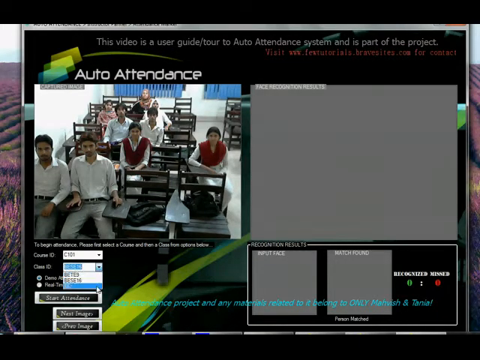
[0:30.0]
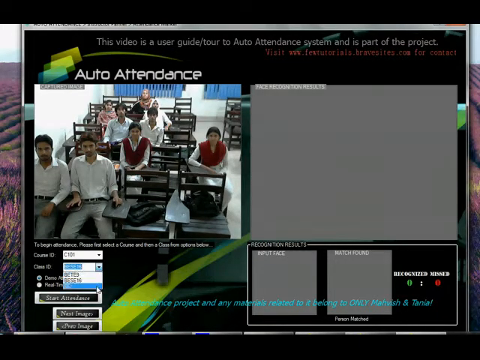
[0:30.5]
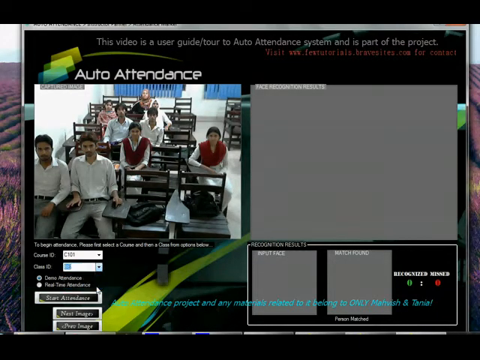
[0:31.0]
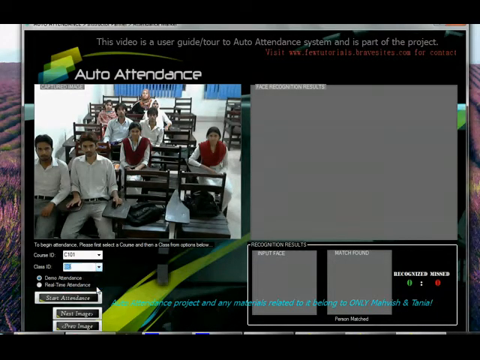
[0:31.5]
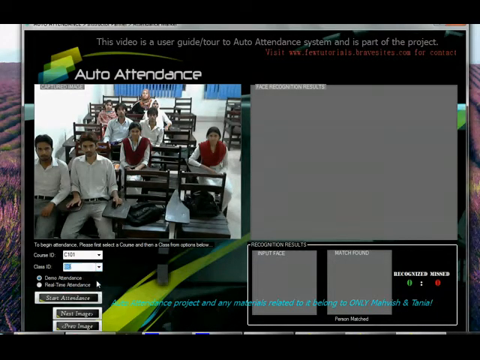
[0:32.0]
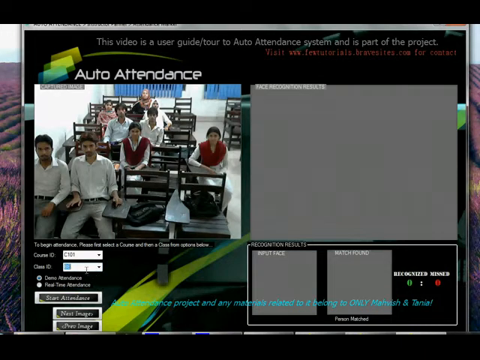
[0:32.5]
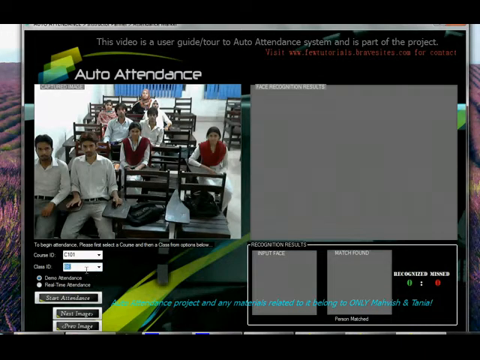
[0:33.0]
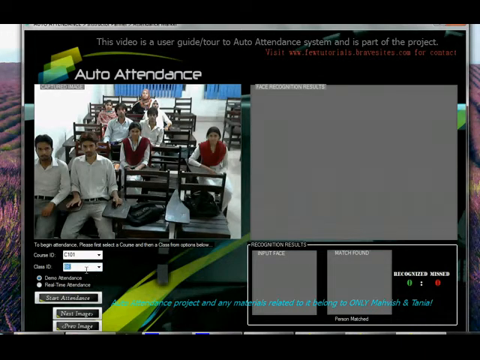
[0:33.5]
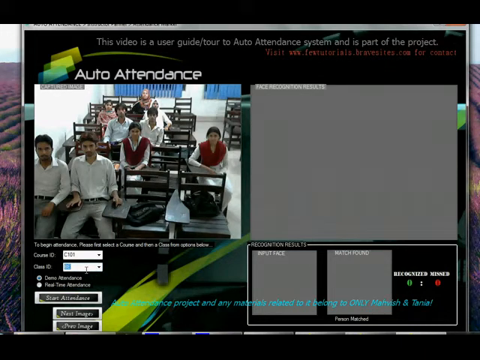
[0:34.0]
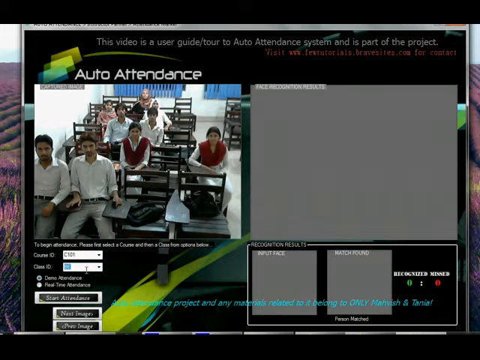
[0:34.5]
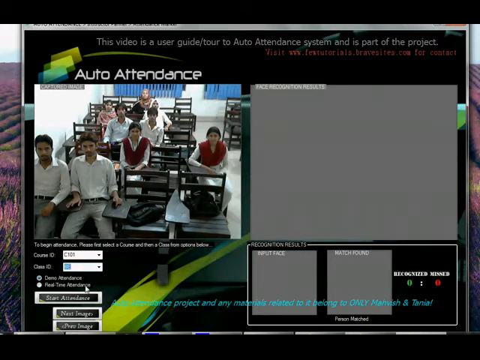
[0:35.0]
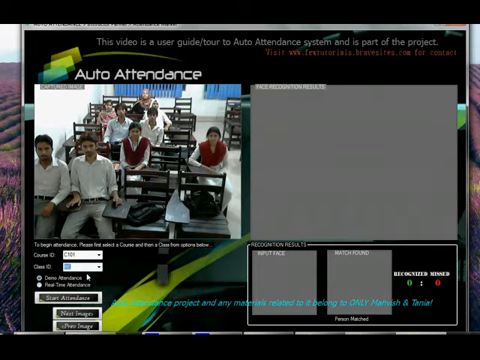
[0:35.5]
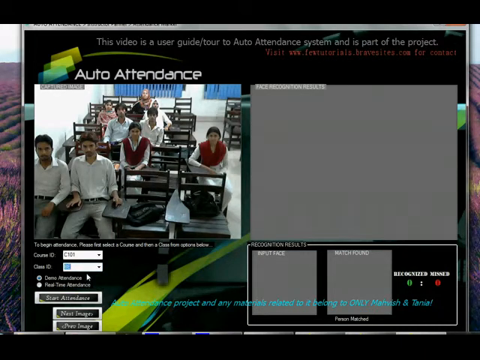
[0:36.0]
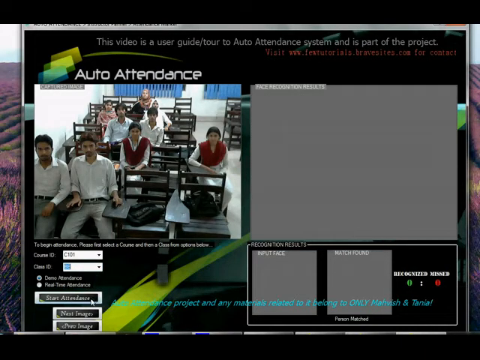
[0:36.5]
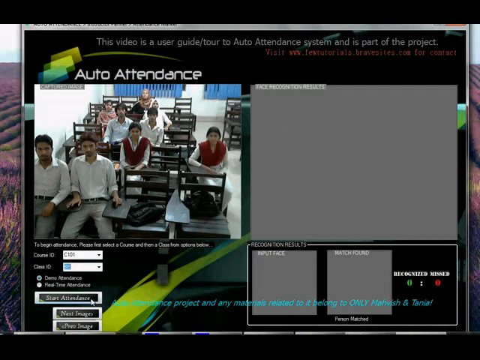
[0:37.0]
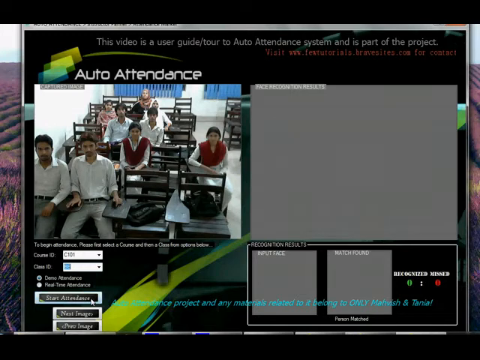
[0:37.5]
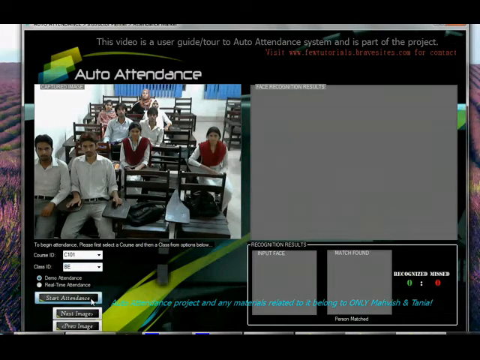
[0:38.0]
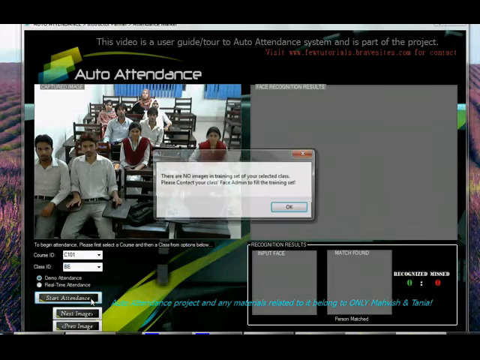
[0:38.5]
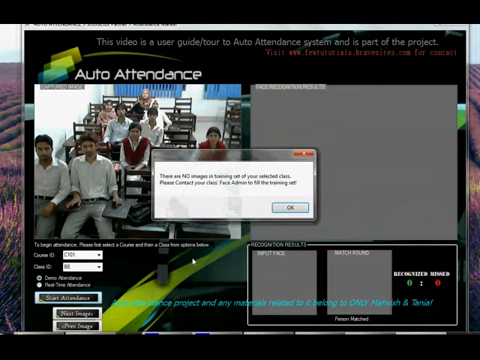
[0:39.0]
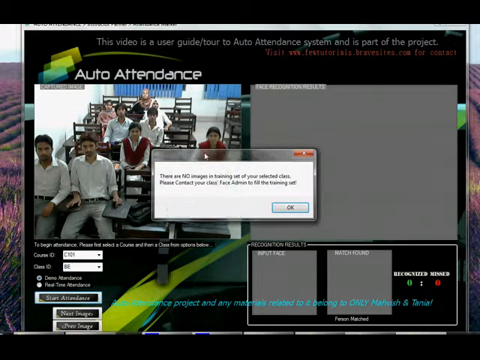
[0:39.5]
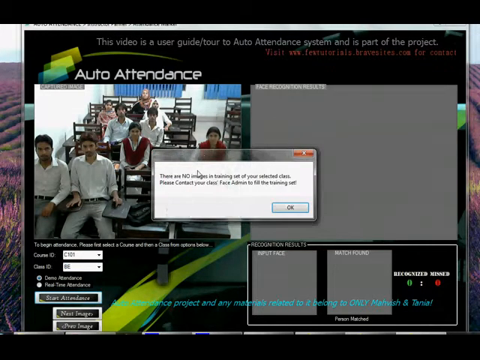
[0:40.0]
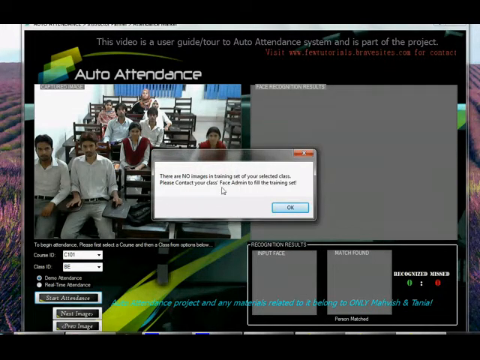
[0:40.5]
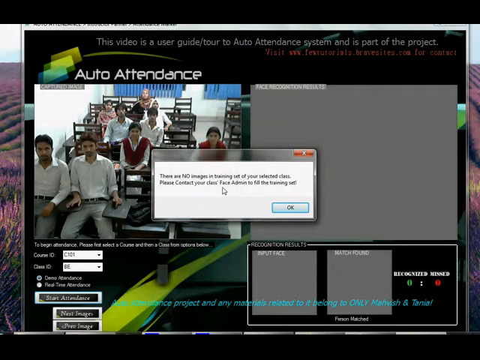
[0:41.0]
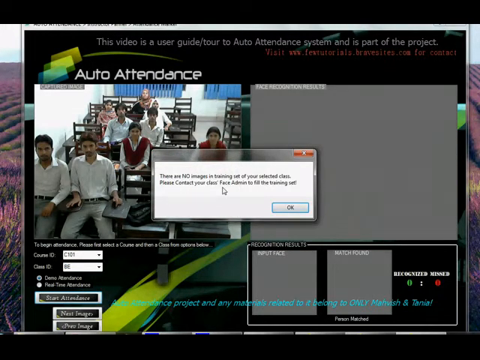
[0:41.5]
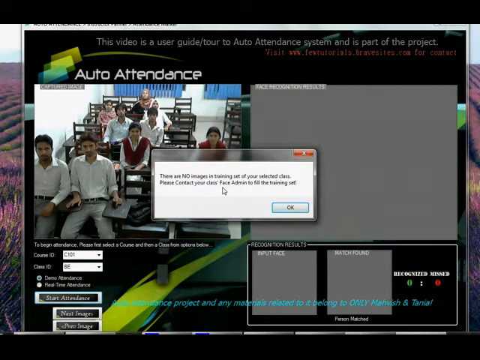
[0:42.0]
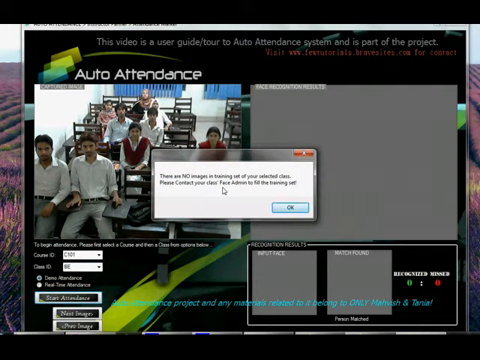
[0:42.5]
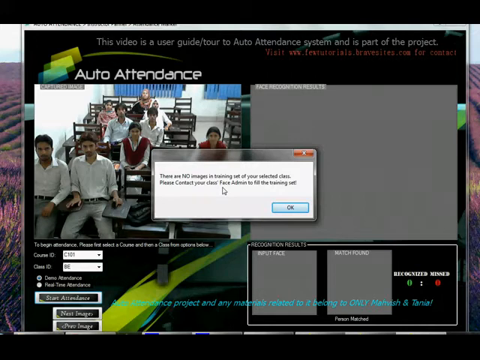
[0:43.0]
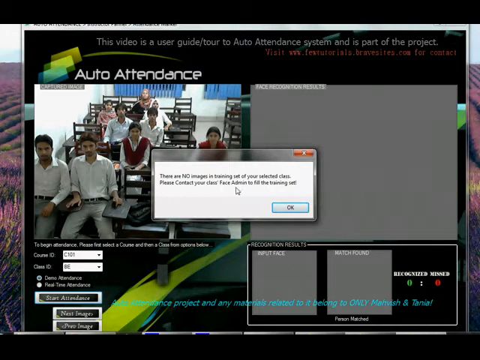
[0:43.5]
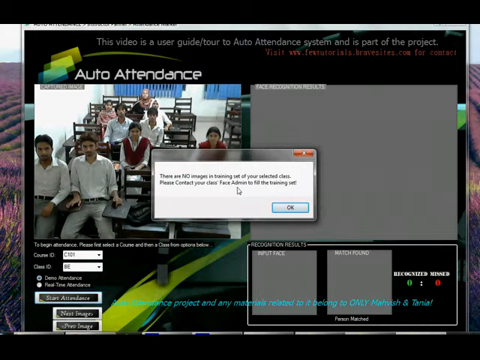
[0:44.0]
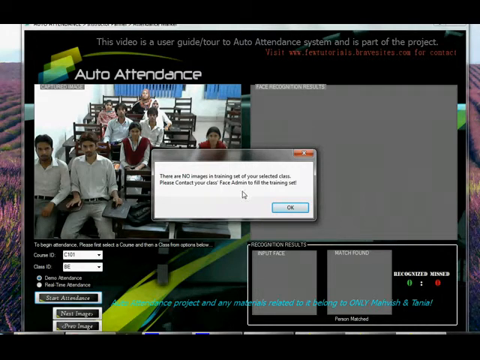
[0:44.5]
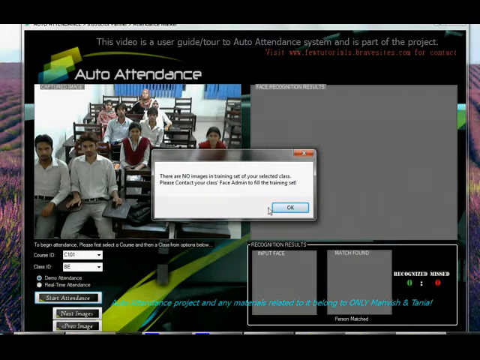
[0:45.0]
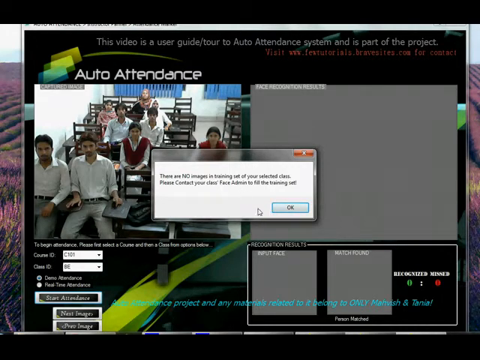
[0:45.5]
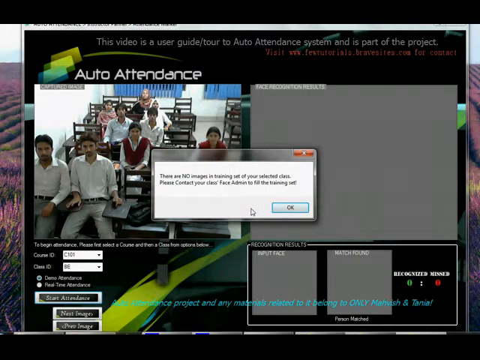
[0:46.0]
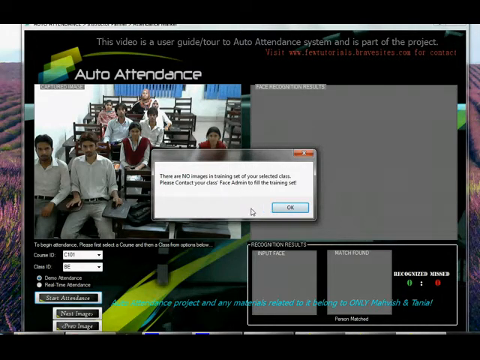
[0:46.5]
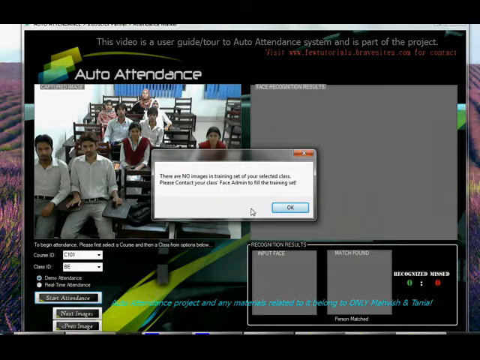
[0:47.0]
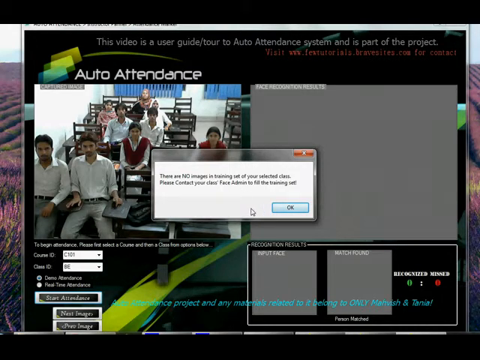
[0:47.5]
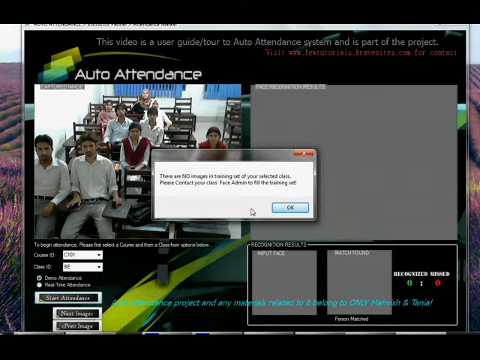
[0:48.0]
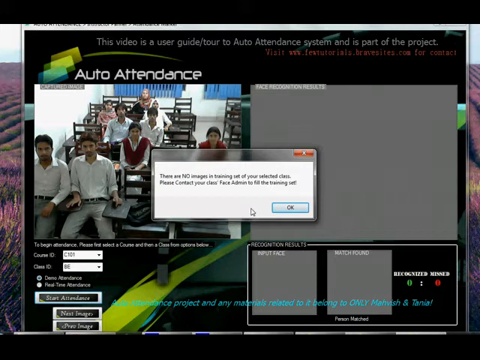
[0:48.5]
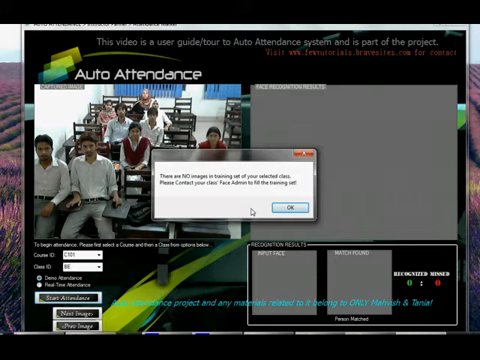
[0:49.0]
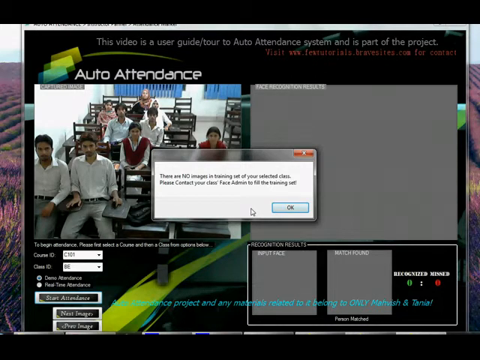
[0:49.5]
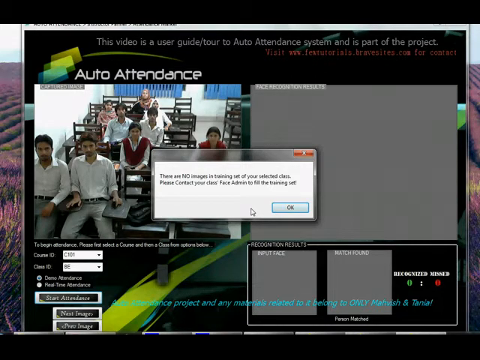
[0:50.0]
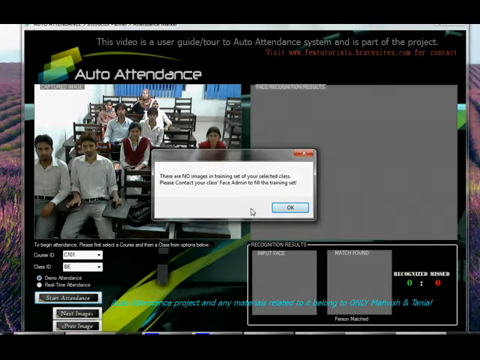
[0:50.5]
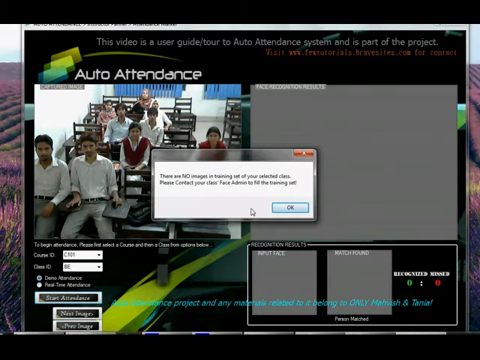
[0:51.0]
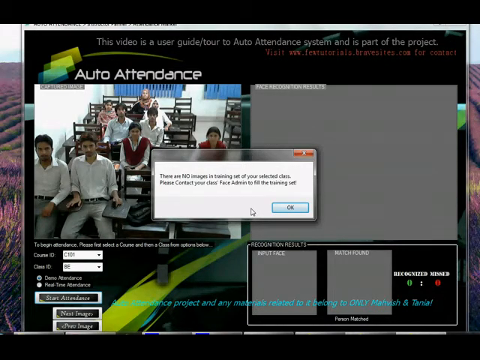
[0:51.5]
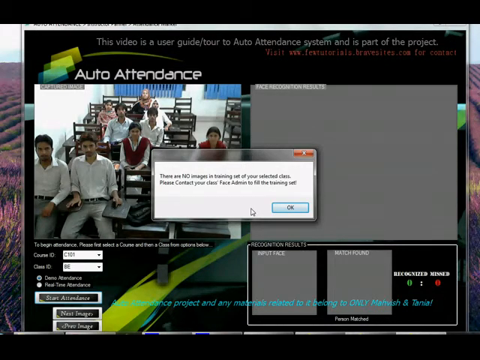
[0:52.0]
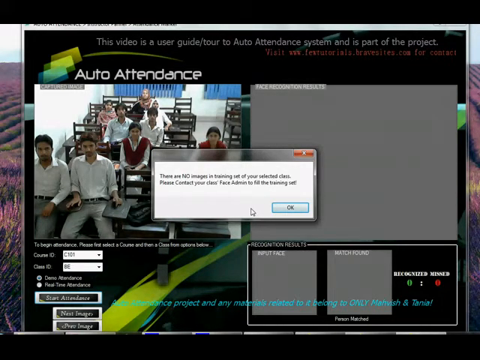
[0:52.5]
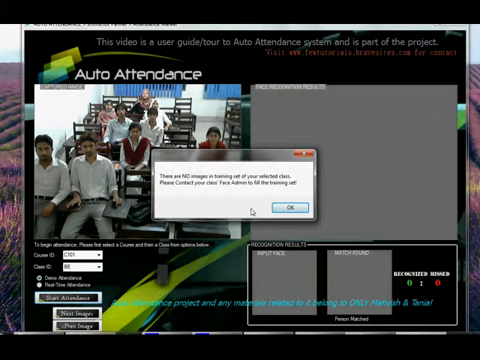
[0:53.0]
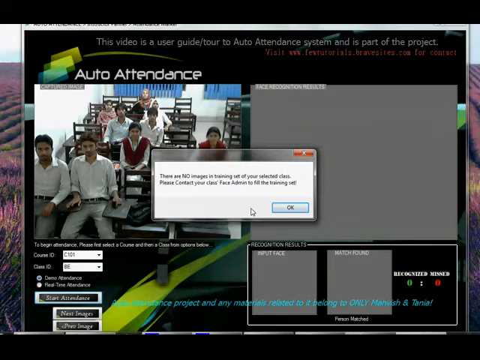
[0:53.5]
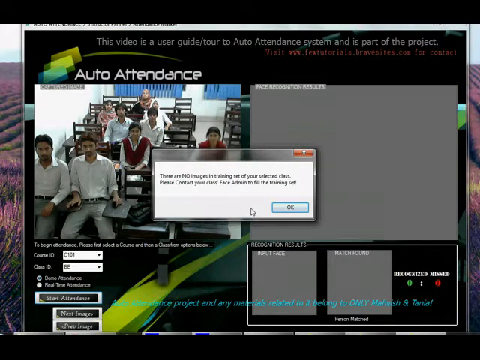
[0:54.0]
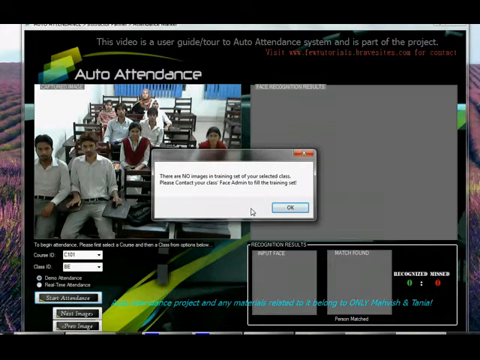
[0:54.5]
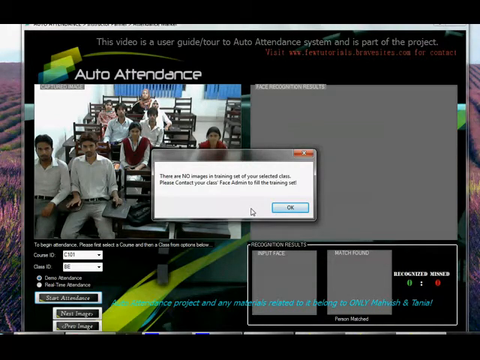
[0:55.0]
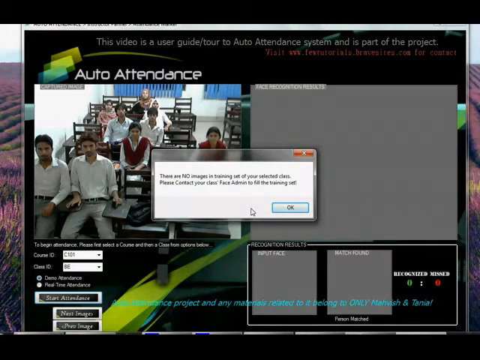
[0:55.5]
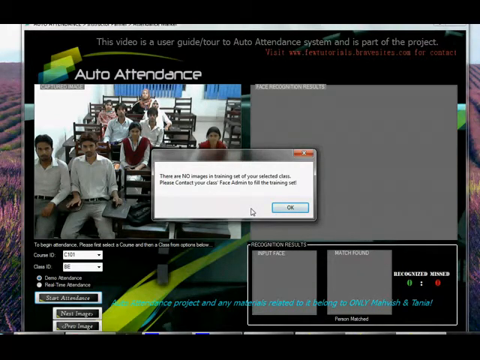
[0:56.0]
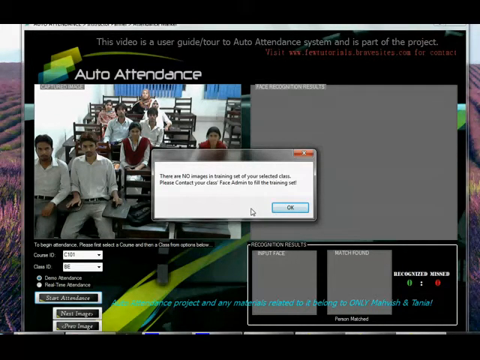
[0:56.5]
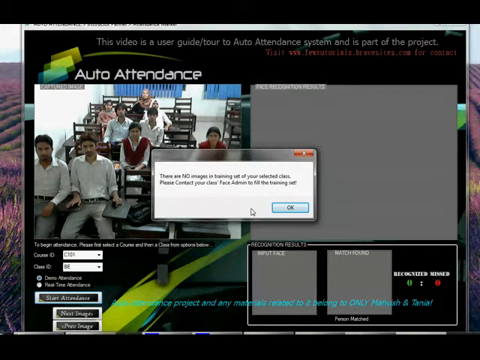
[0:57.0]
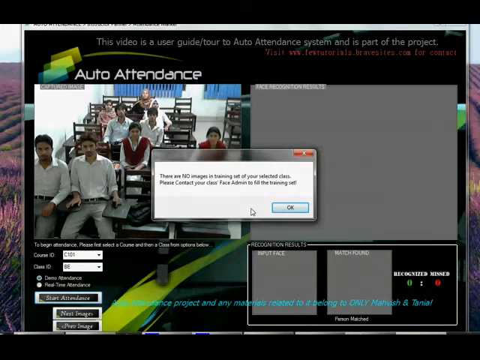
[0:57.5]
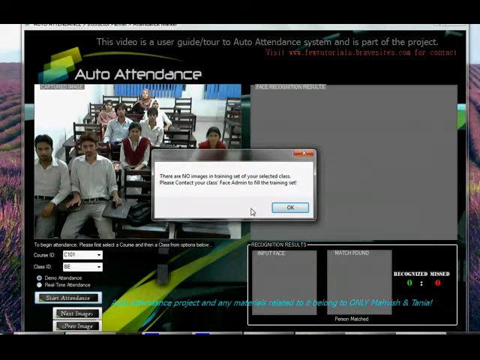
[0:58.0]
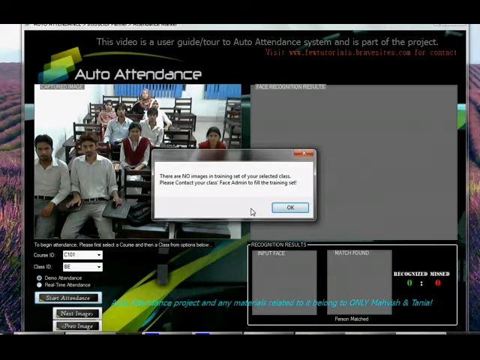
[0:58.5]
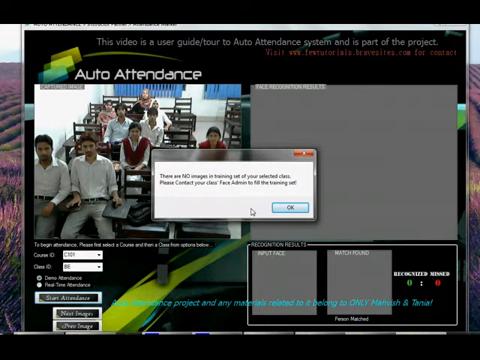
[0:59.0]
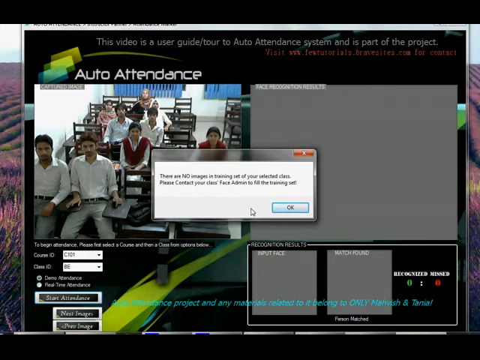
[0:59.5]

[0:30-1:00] Several men, about four, appear in white shirts and gray pants, and two women seem to be wearing some red, with more people in the background; there look to be about eight people in total. There are gray boxes, and the man changes parameters around, with items being highlighted and moved. A pop-up appears saying "there are no images"; the rest of its text is a little blurry and unreadable. He looks at it and reads it without clicking. Changes in the parameters are visible below, and there are a couple of other boxes reading "input face" and "match found," plus something designated that cannot be read. There is some blue text at the bottom.